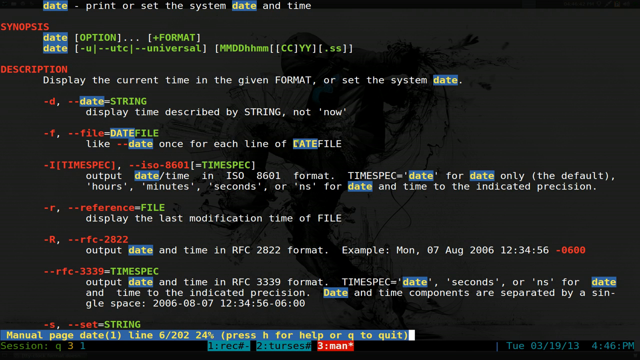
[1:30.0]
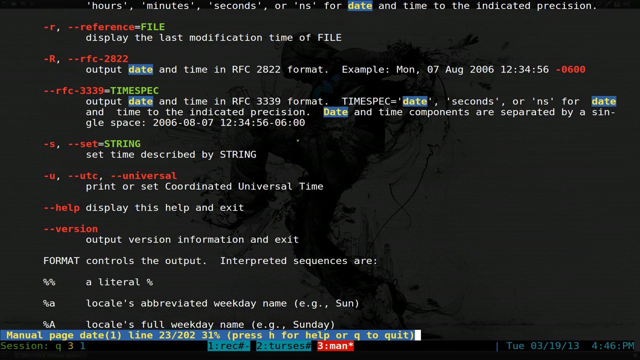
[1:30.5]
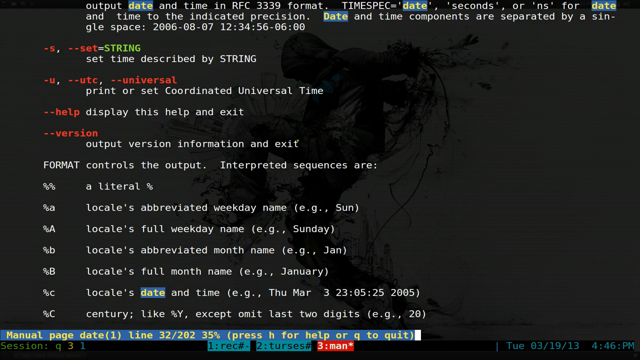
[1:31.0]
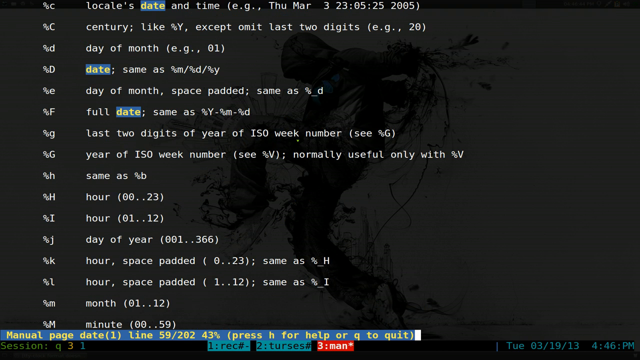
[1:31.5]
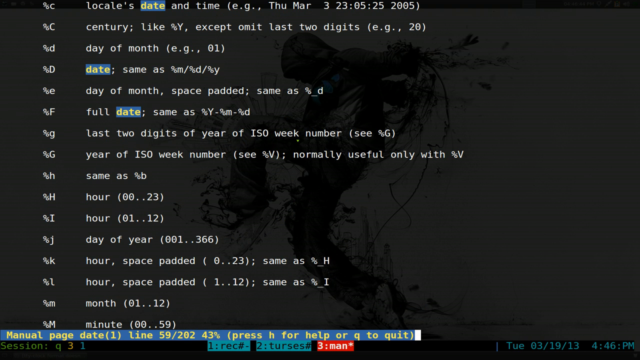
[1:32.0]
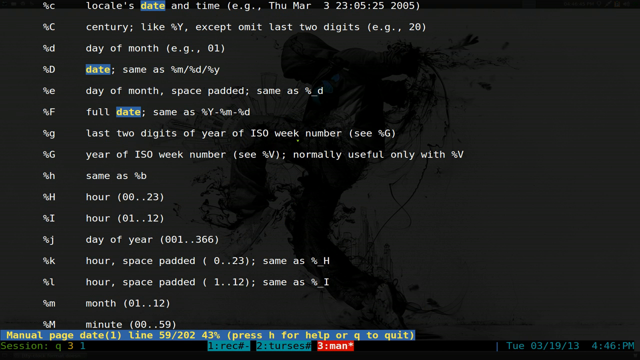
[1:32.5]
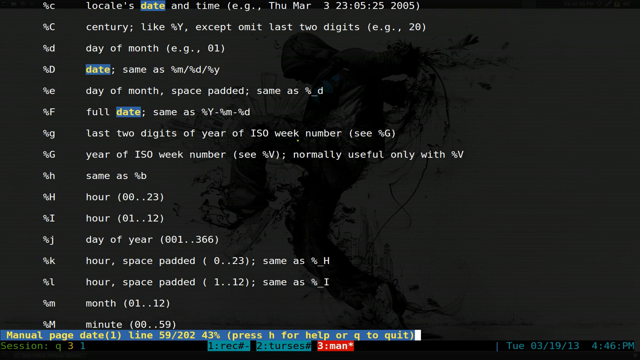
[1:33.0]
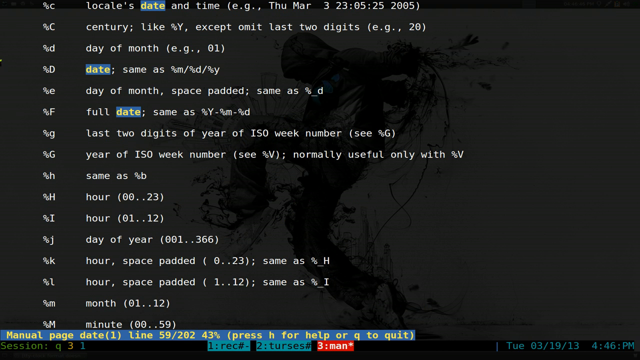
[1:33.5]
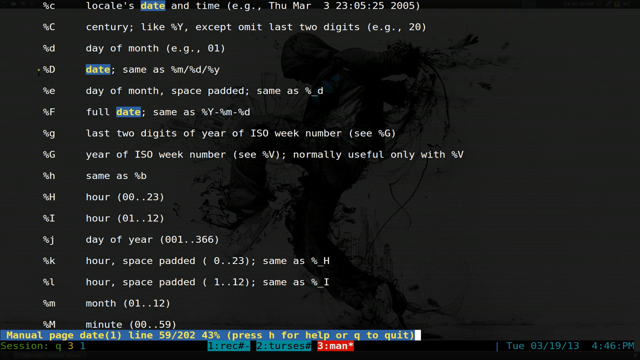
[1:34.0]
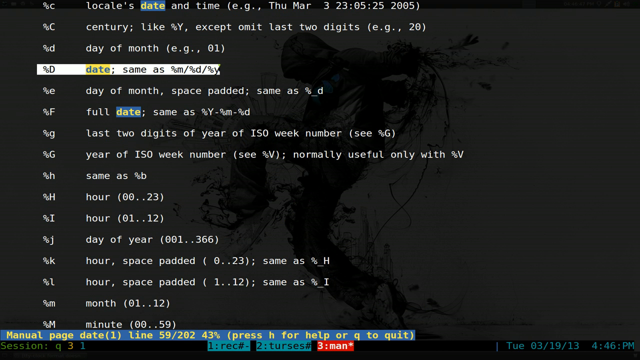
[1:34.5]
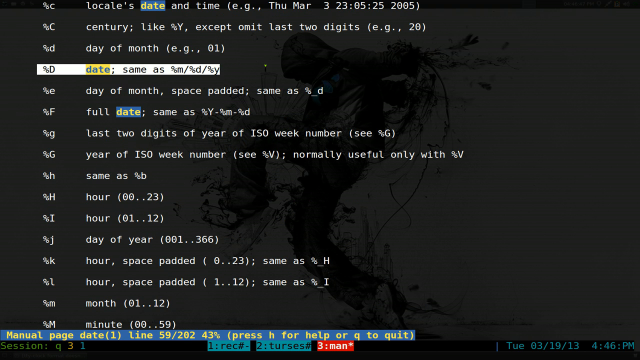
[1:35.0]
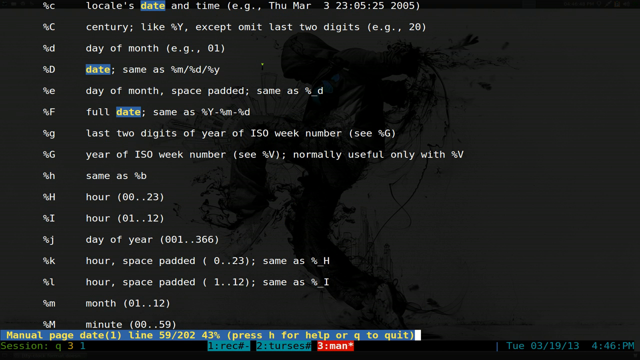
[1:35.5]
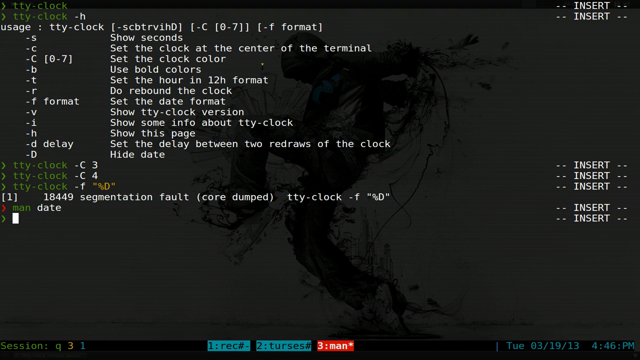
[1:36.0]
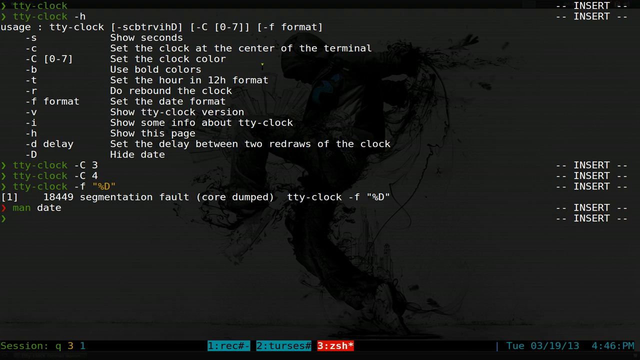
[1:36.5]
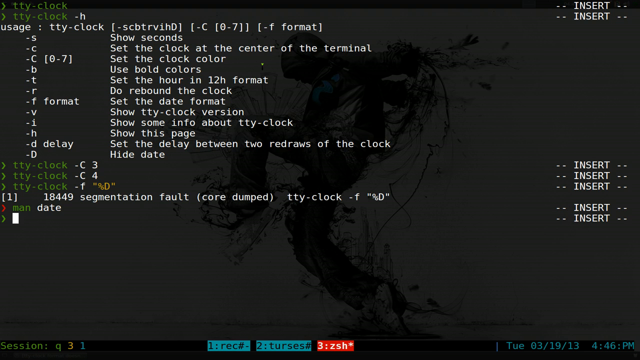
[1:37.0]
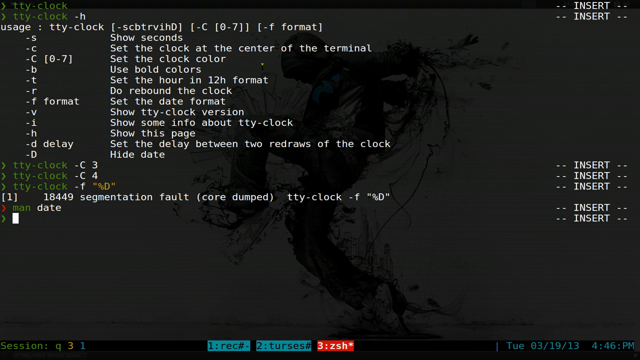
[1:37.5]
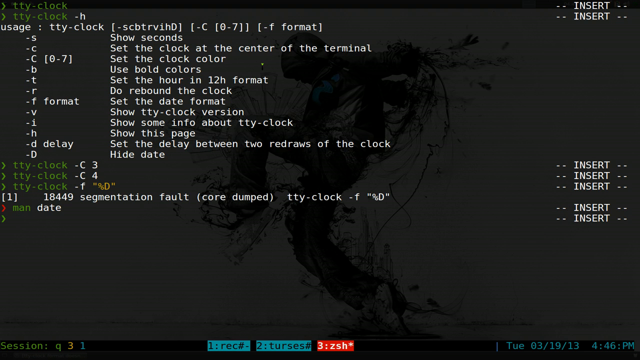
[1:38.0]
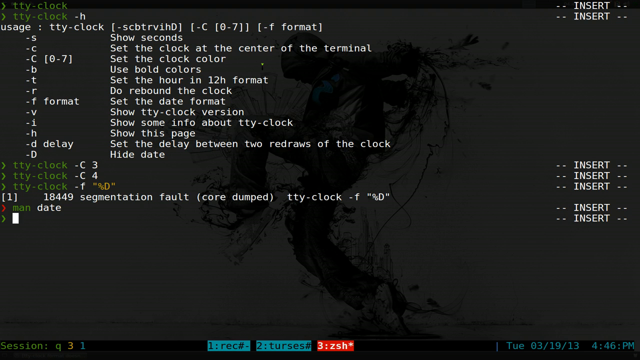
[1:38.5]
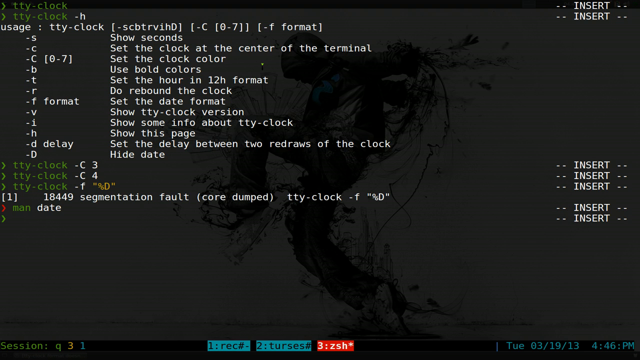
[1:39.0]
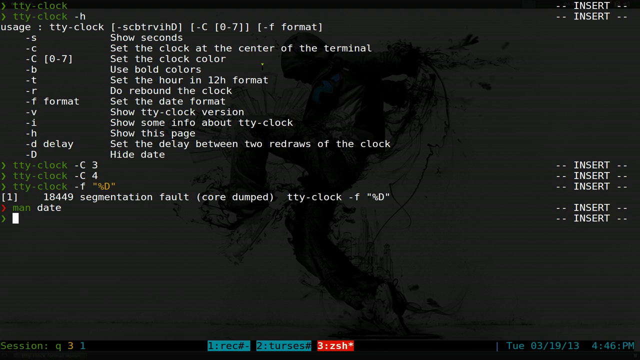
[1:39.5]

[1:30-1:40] A black command screen is full of different commands and parameters, with text written in red, green and white. The text at the top says "dates - print or set the system date and time", followed by a line beginning "Synopsys date option". The rest of the screen explains how to use the date and time command. The screen scrolls downwards, showing more examples and usage of the date and time command. One of the options is highlighted: a percent-sign option for the date, described as the same as month, day, year. The cursor then blinks as if waiting for a command.